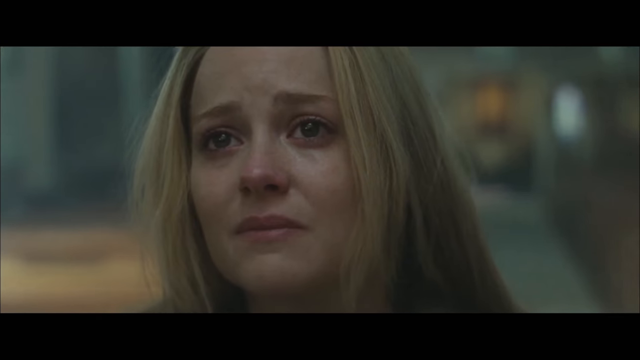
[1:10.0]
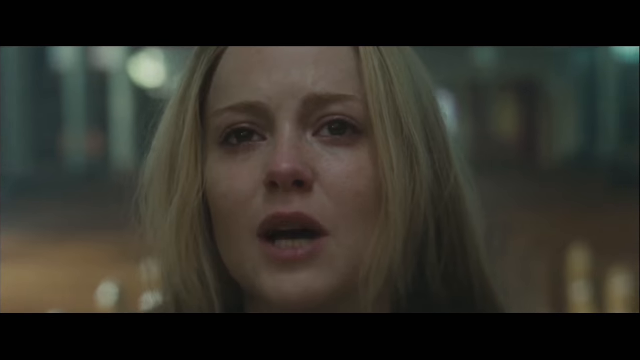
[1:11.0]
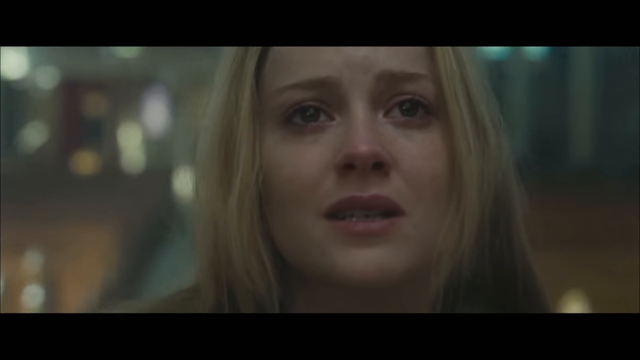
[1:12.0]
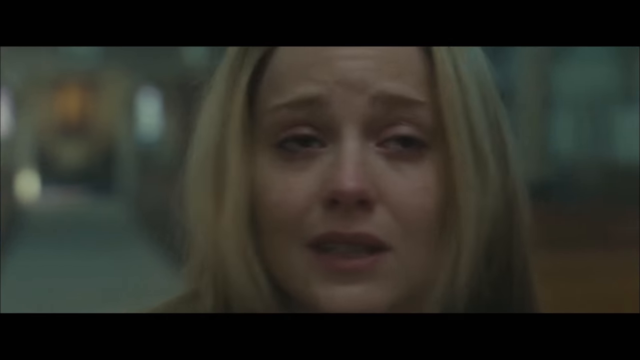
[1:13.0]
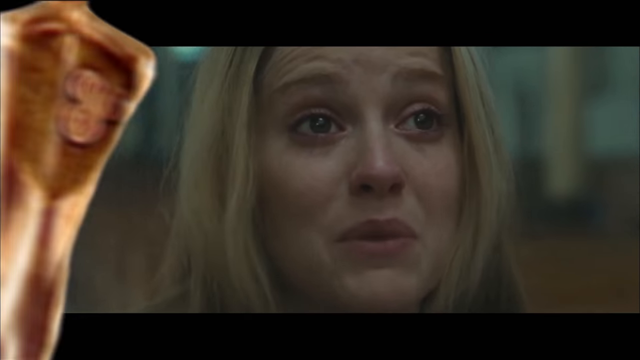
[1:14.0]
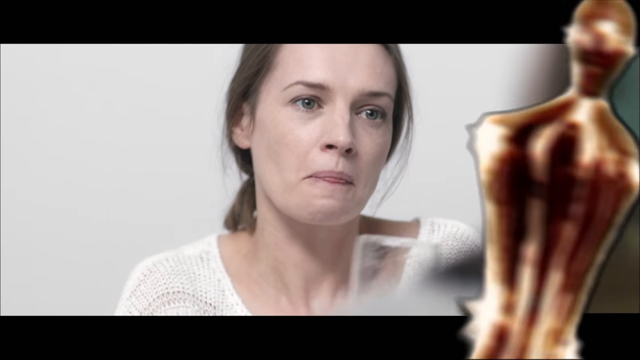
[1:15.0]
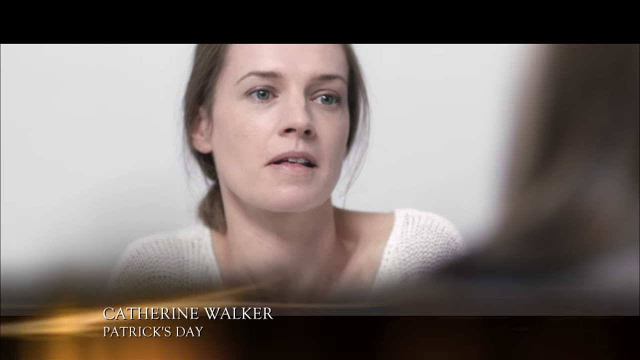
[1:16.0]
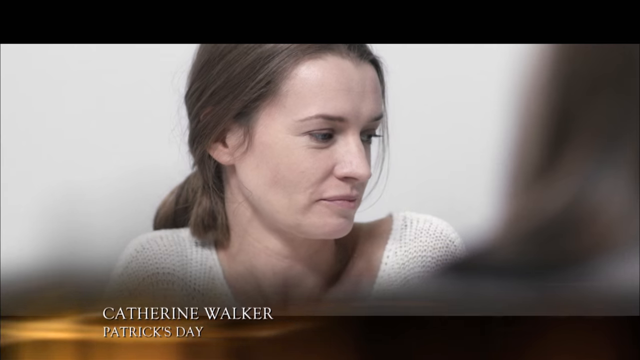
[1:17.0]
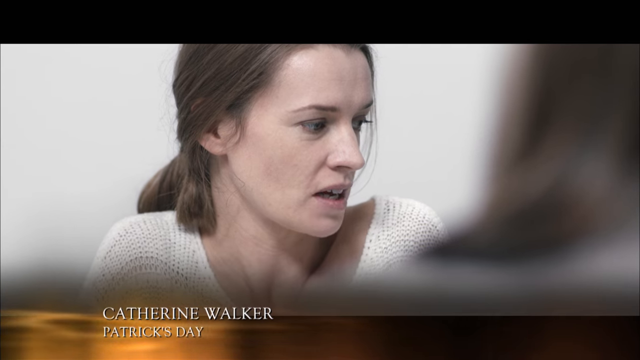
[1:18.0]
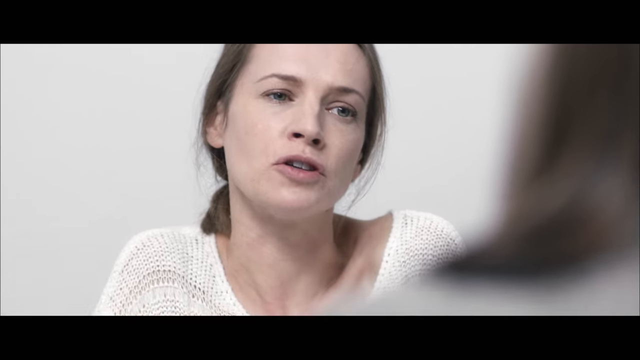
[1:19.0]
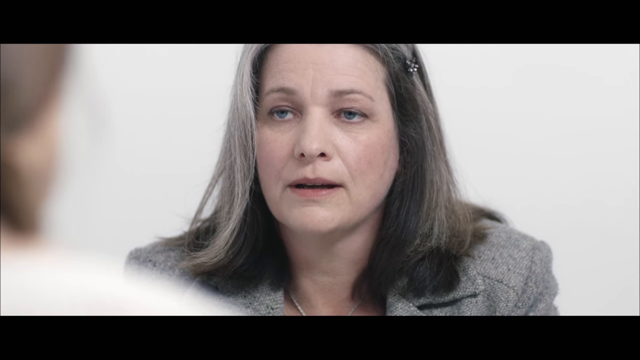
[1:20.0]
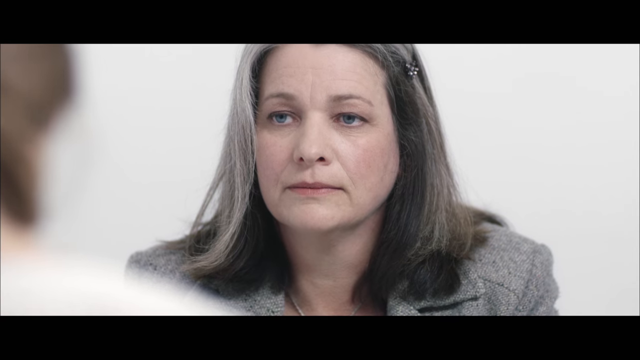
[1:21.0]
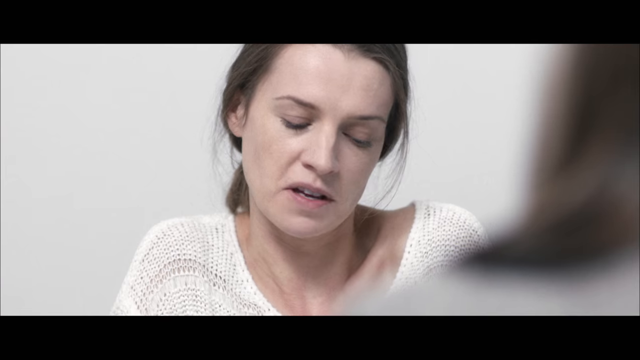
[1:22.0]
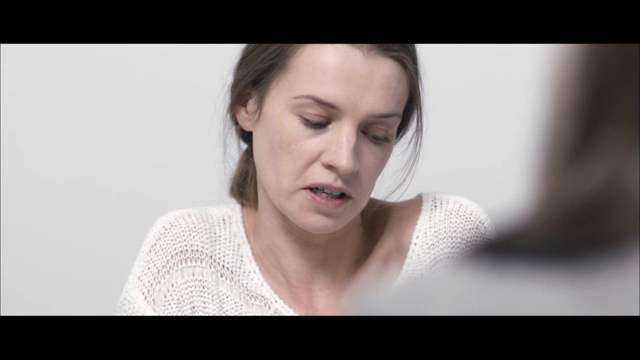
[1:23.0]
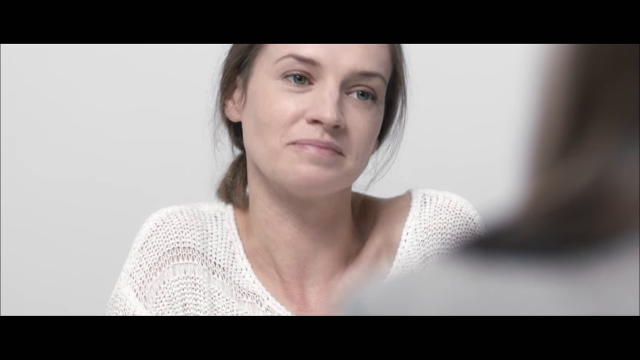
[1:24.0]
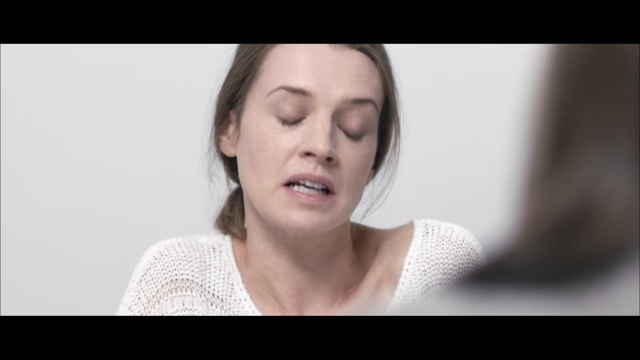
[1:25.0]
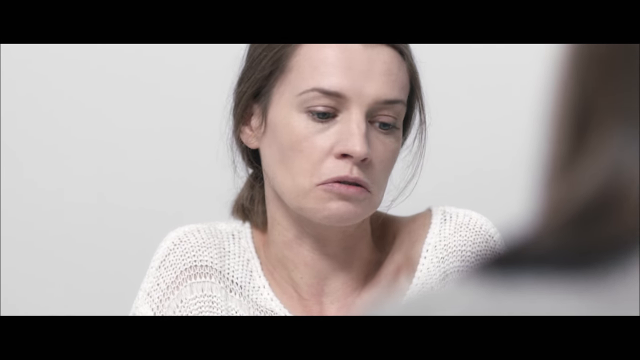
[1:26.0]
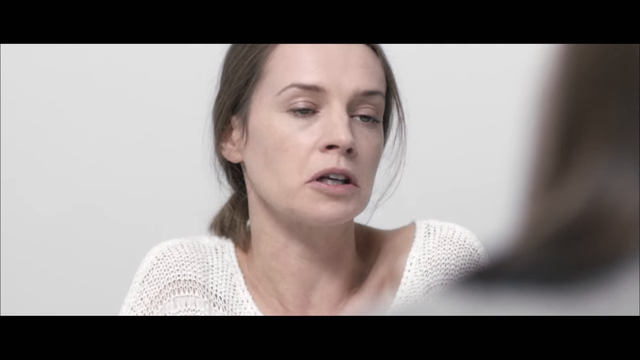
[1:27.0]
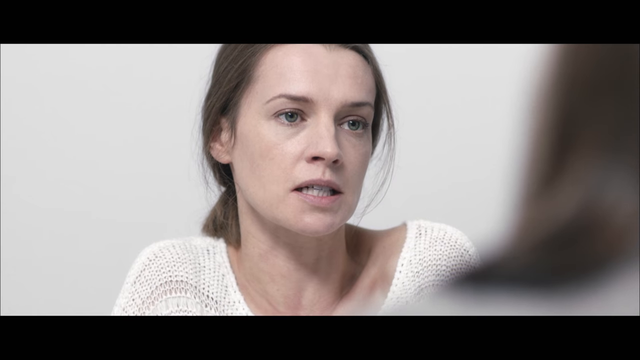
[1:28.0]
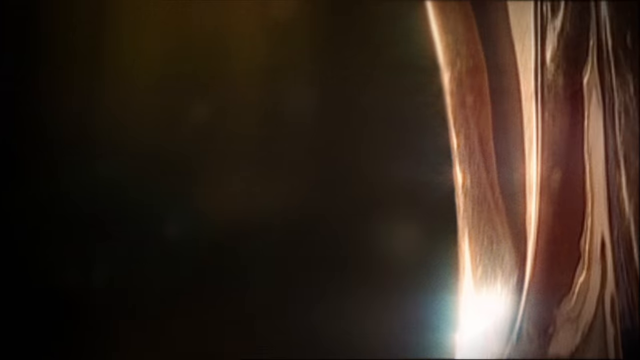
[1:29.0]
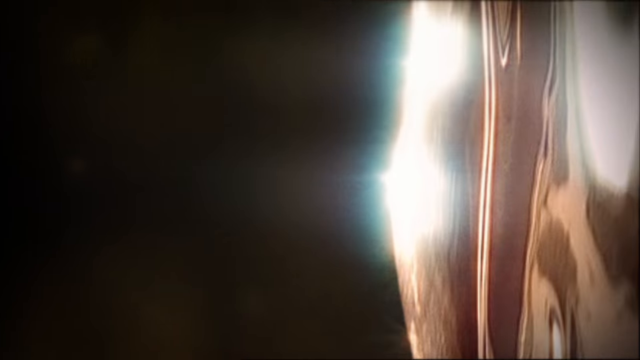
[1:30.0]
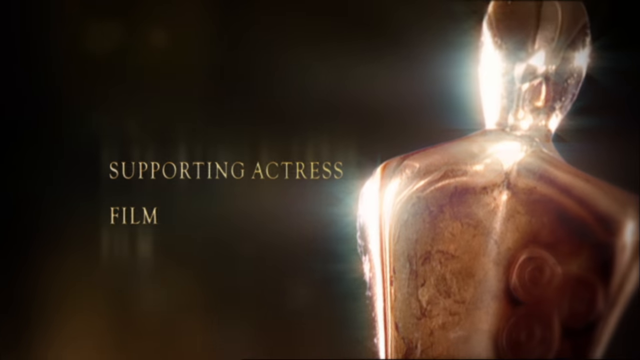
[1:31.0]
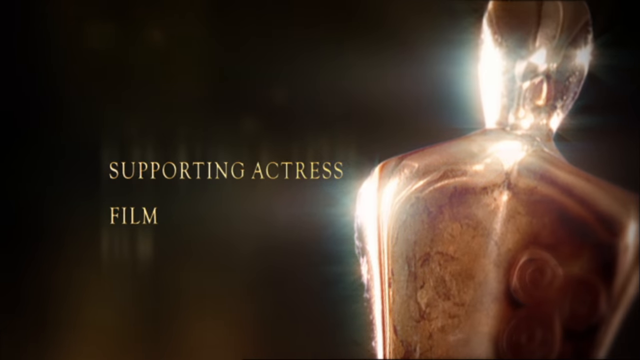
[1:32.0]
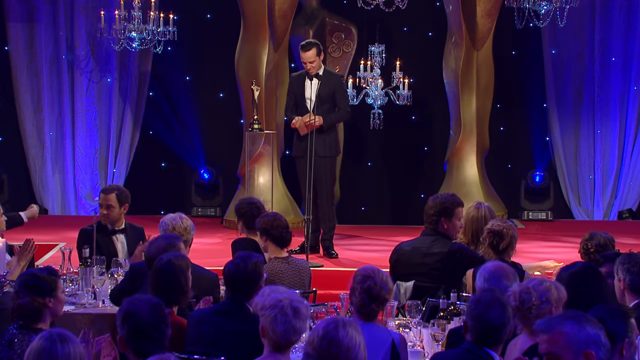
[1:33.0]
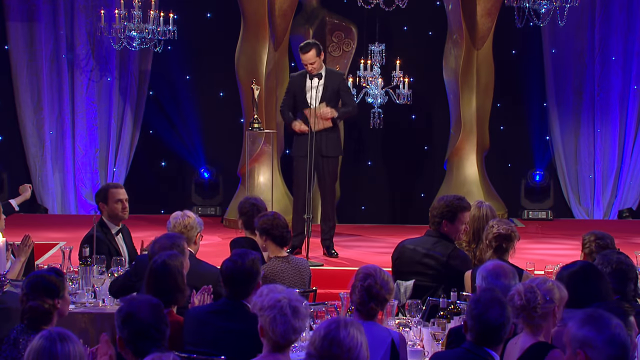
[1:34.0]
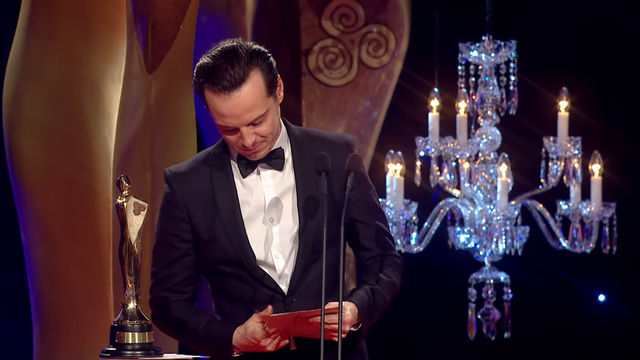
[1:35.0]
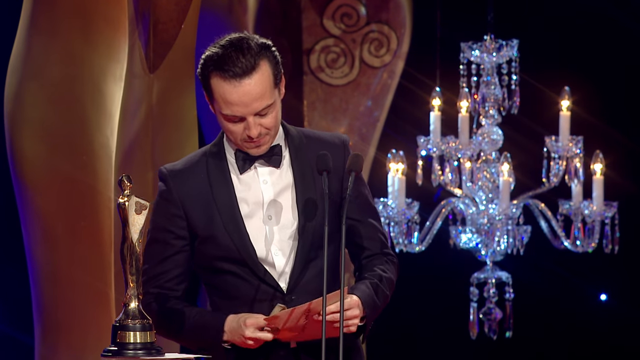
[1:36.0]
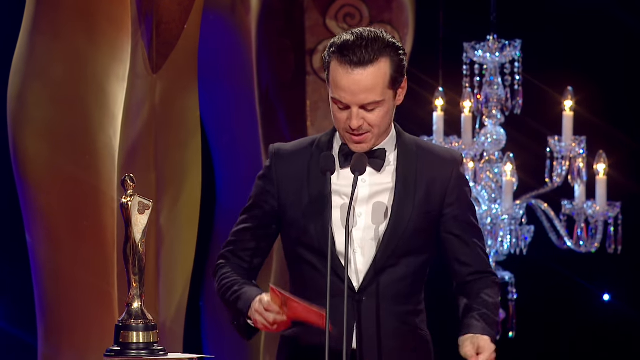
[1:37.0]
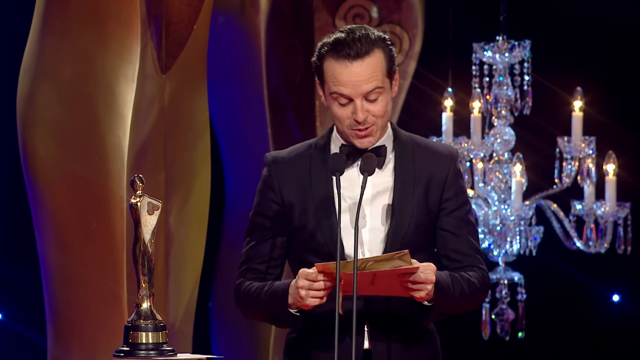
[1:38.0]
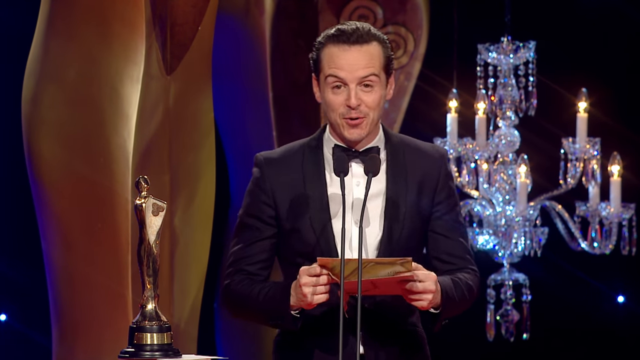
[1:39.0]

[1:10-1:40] The camera pans around the face of the woman in the church in close-up; she looks like she is crying and upset, and she is talking, but whoever she is talking to is not shown. The screen then changes to "Catherine Walker, Patrick's Day": a woman in a white shirt and a woman in a brown jacket, apparently in a white room, seem to be having a conversation that does not look happy. The video returns to the supporting actress award and then to the man on the stage, which is still red with chandeliers hanging around it. He opens the envelope and starts reading from it.